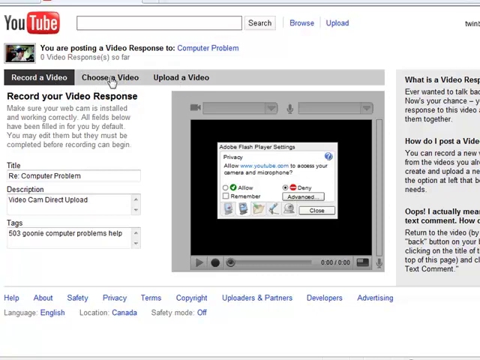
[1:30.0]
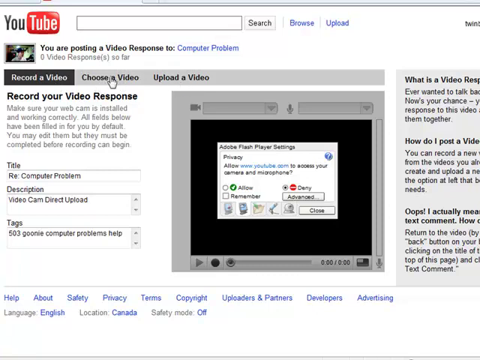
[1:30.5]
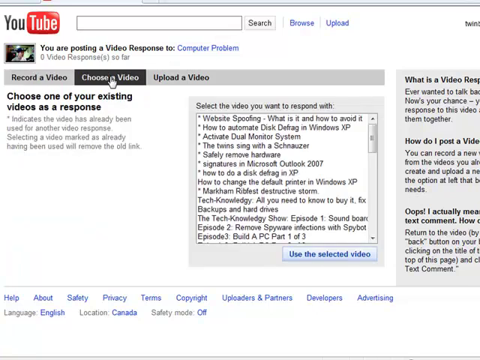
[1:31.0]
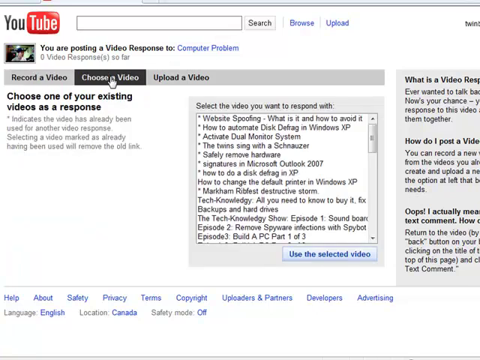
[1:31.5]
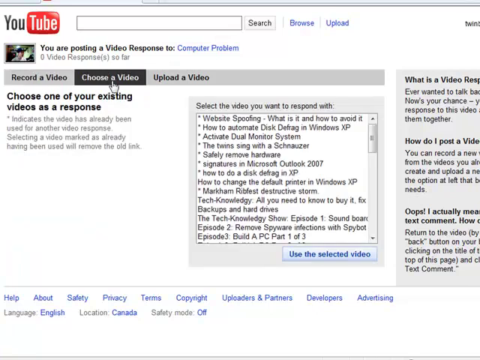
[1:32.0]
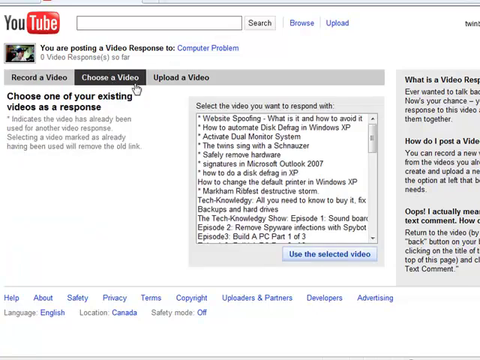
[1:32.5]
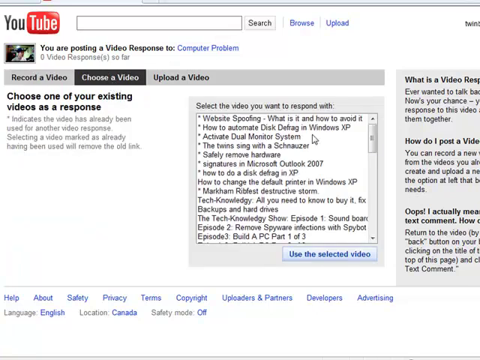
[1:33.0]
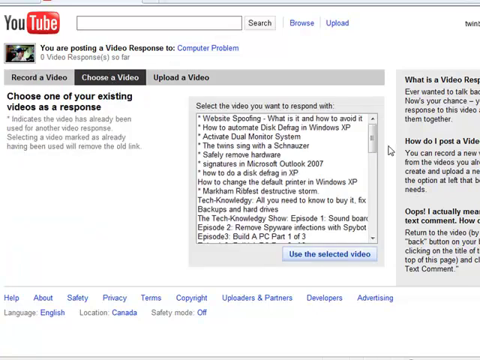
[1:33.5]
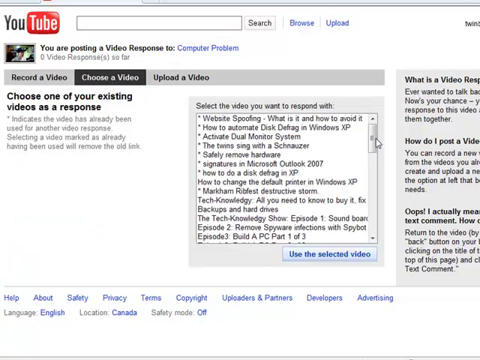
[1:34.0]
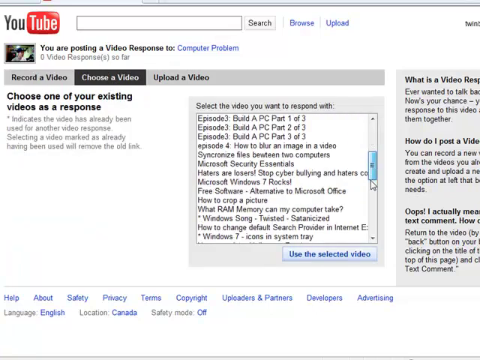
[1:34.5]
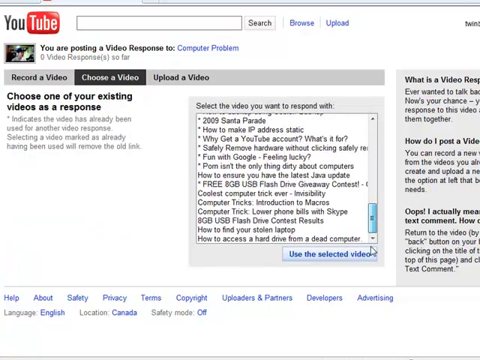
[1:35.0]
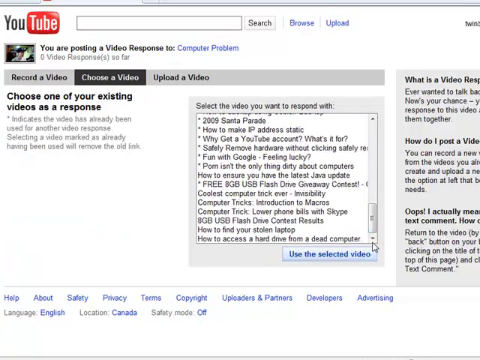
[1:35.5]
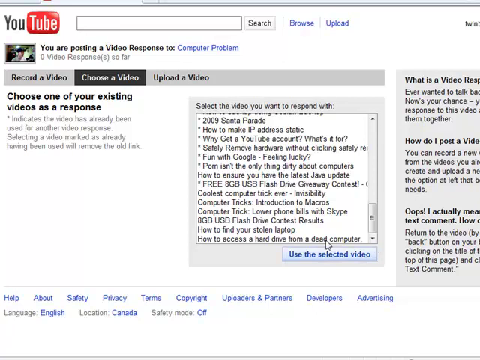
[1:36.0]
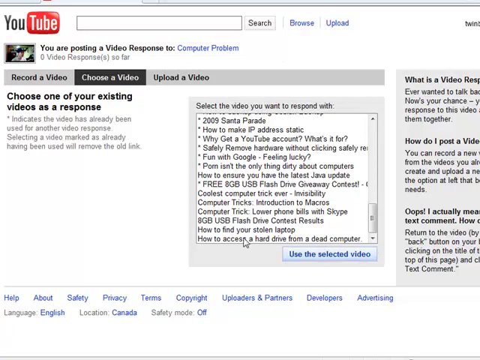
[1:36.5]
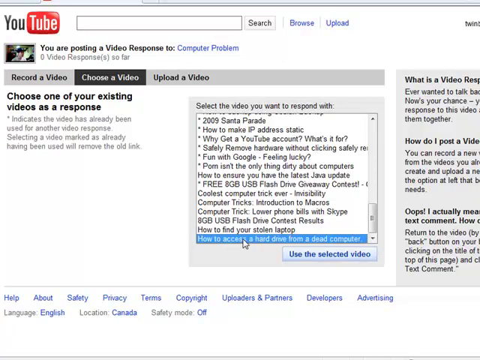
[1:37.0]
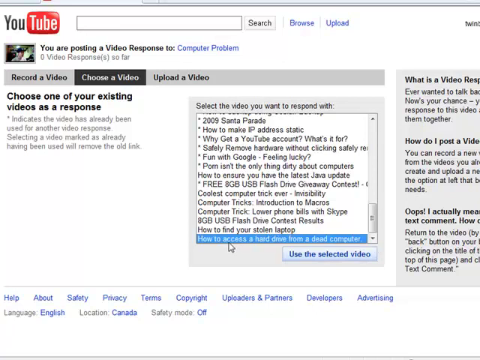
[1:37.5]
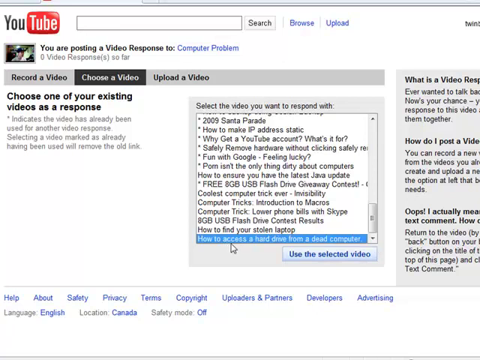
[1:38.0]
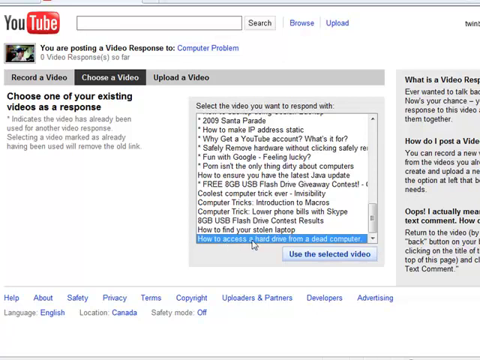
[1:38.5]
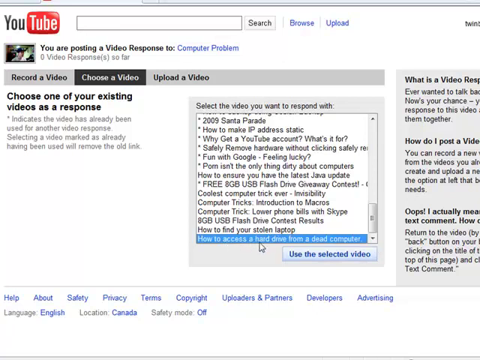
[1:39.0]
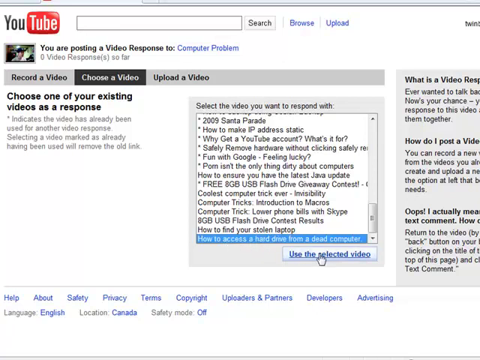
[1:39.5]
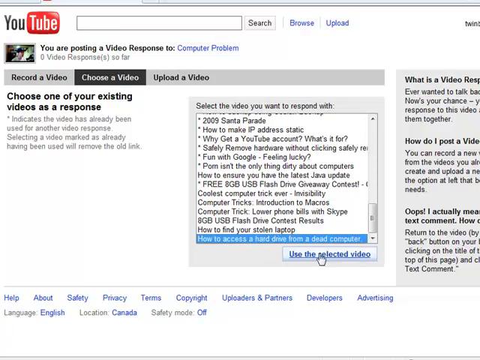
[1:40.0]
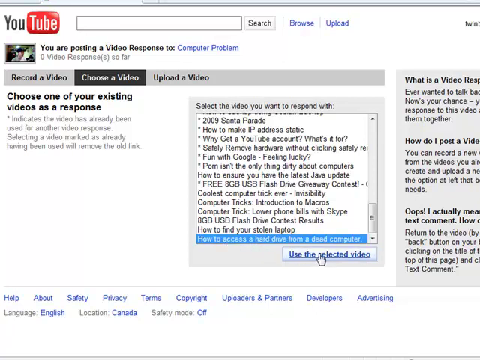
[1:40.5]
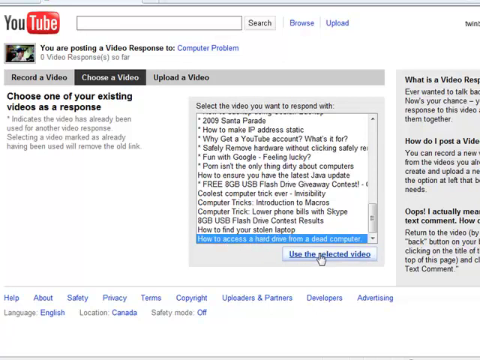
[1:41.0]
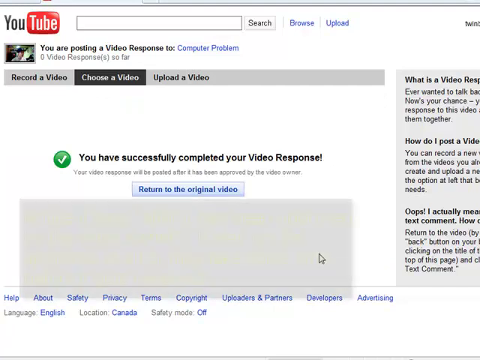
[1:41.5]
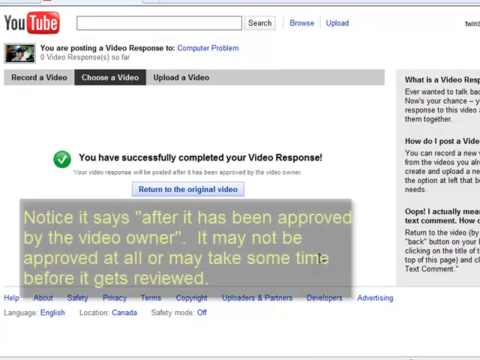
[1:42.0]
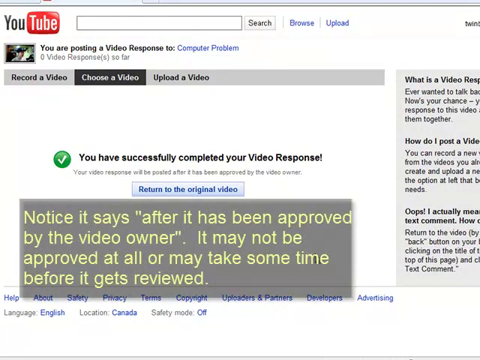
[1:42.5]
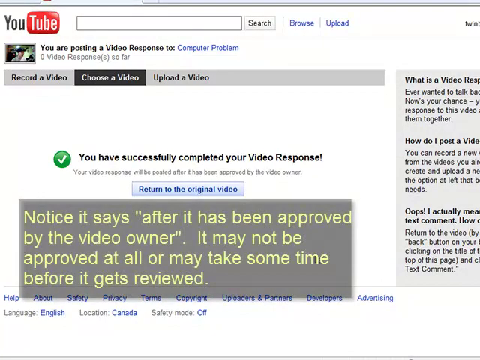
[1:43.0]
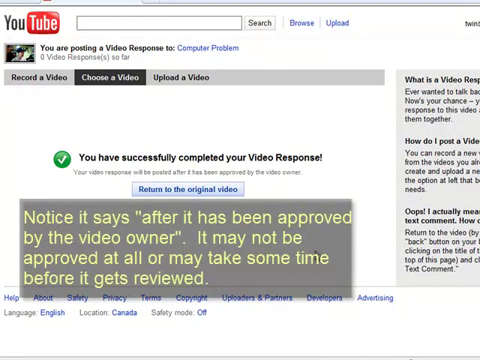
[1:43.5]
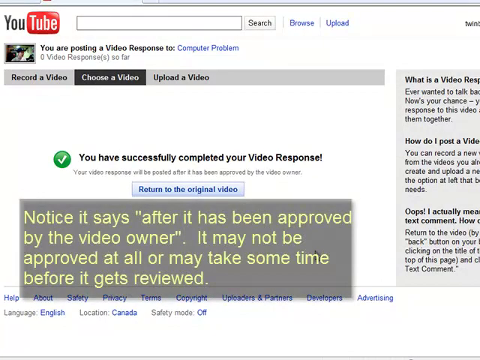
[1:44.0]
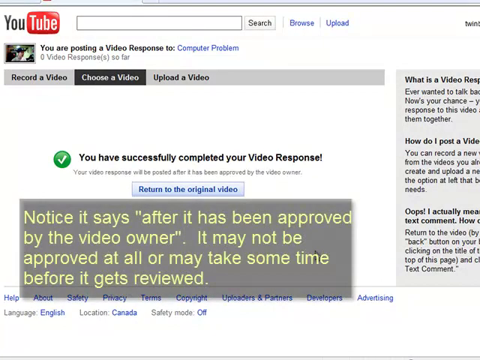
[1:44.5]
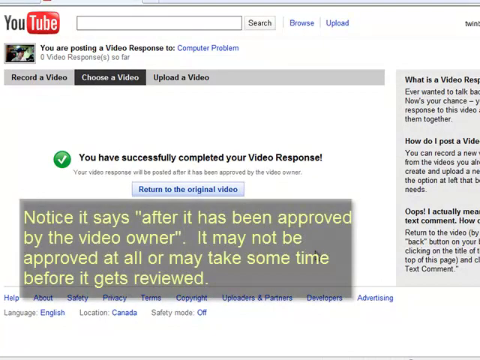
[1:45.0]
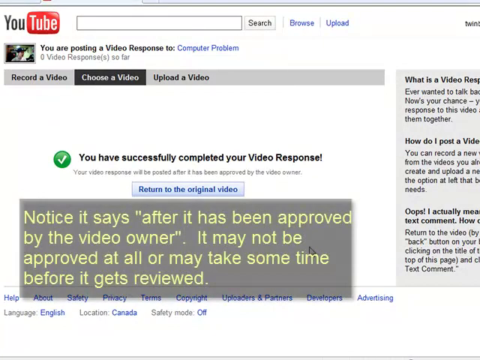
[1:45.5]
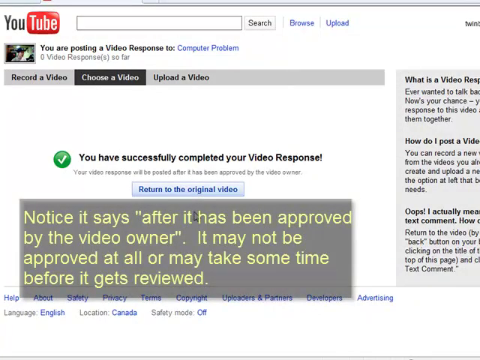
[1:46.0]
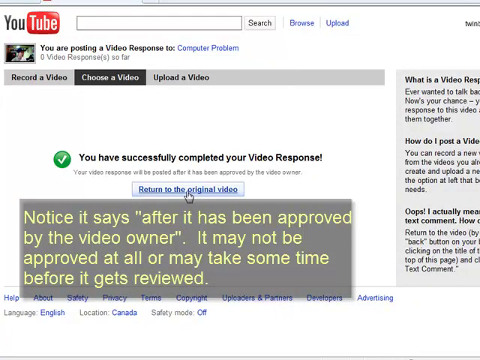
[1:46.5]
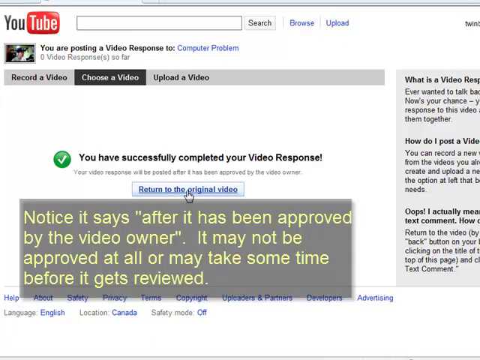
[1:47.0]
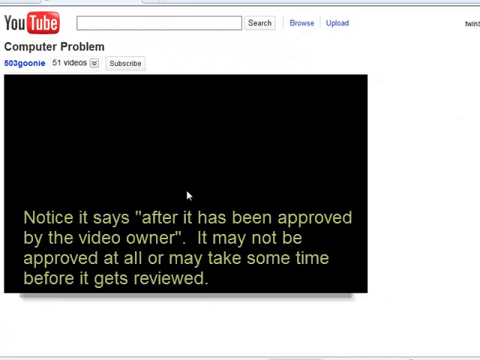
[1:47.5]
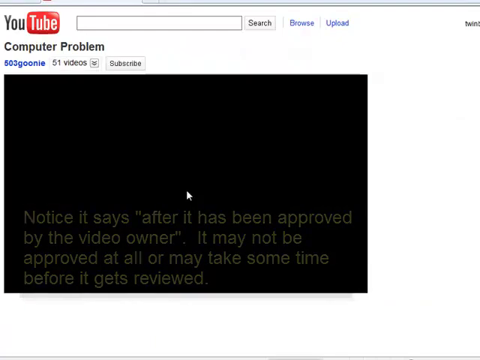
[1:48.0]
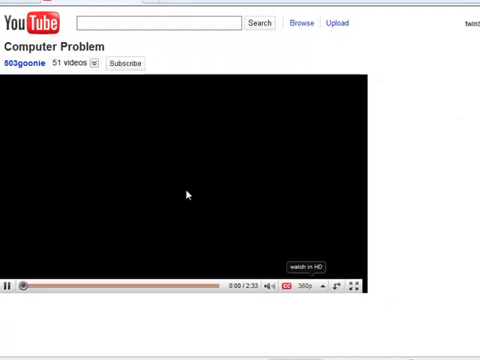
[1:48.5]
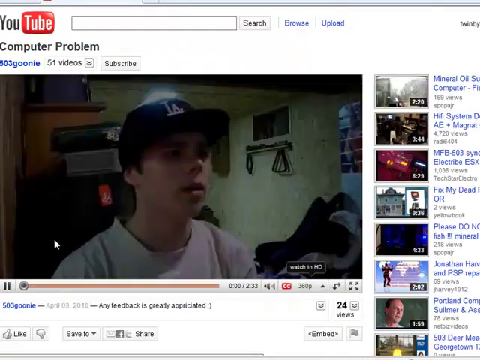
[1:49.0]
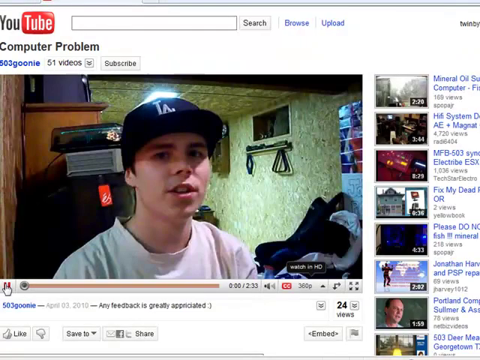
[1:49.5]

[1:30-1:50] The mouse clicks on "Choose a video", which opens a small panel in the centre of the screen titled "Select the video you want to respond with", containing a list of video titles. The pointer grabs the slider bar on the right-hand side of the panel, scrolls right down to the very bottom, and selects the last option on the list. It then moves to the button below the list, "use the selected video", and clicks it. The next screen shows a green tick and the words "you have successfully completed your video response", with a button below, "return to the original video". A caption appears in a gray background box with yellow text: "Notice it says, after it has been approved by the video owner, it may not be approved at all or may take some time before it gets reviewed". The mouse clicks the return button, and the screen goes back to the original page shown at the start of the video.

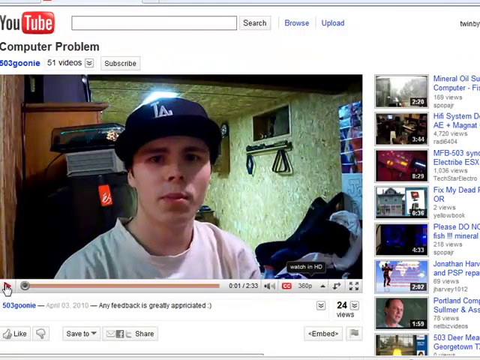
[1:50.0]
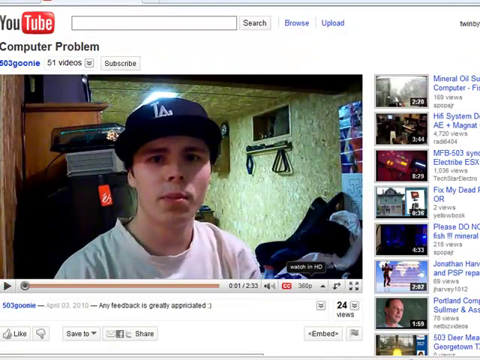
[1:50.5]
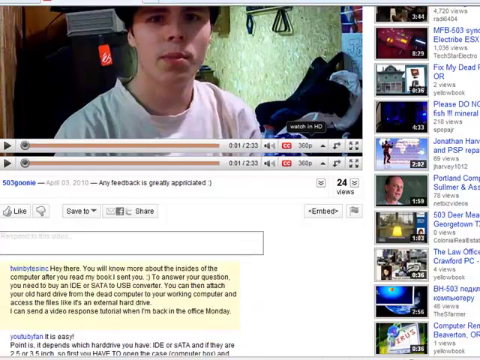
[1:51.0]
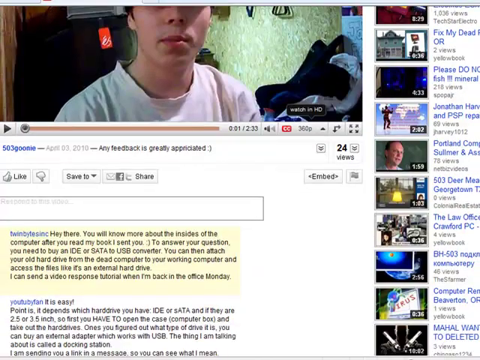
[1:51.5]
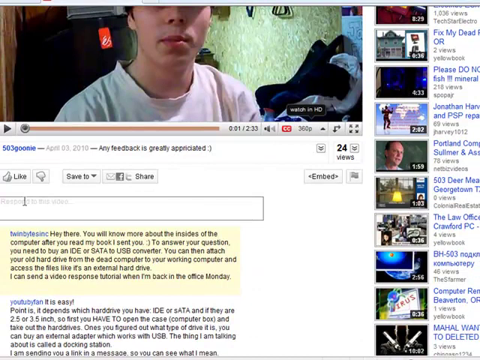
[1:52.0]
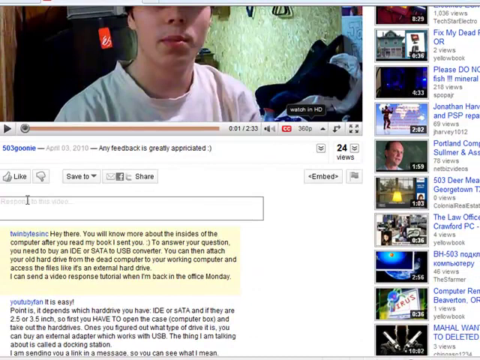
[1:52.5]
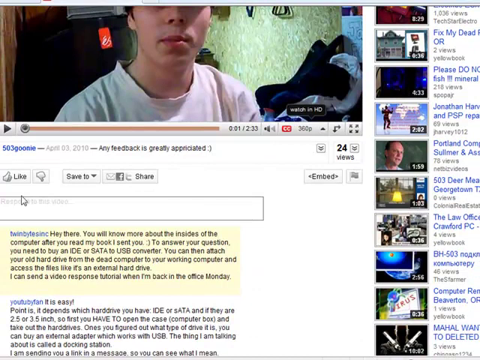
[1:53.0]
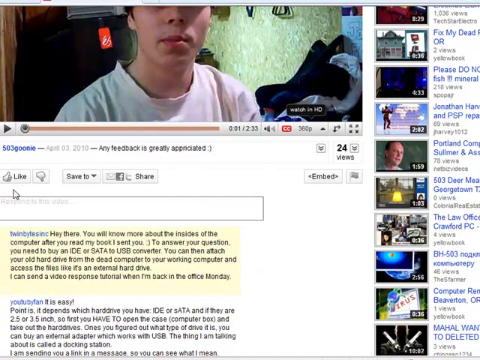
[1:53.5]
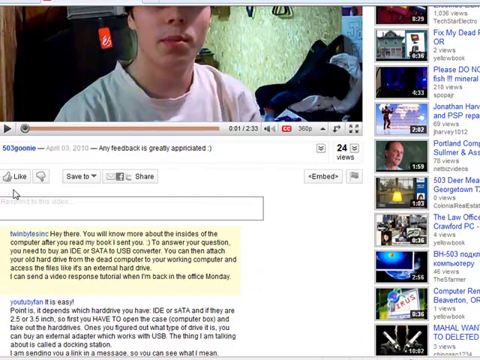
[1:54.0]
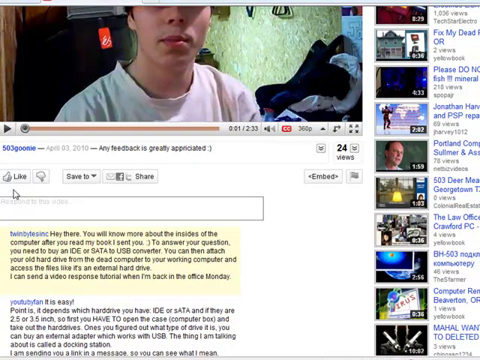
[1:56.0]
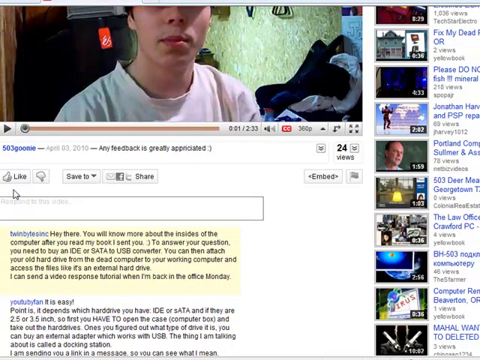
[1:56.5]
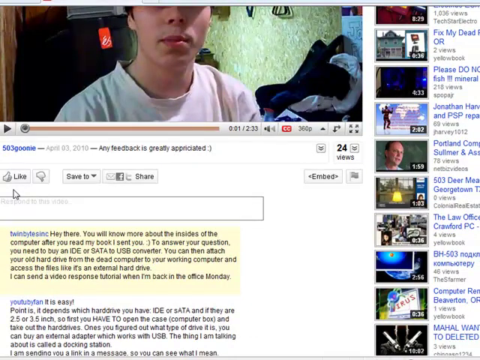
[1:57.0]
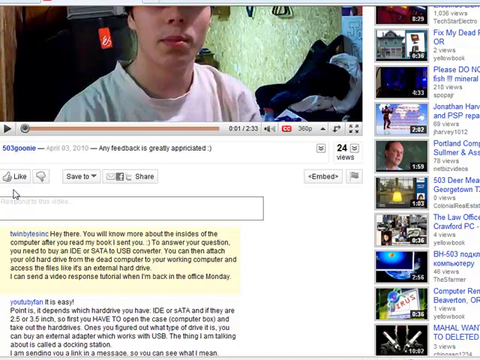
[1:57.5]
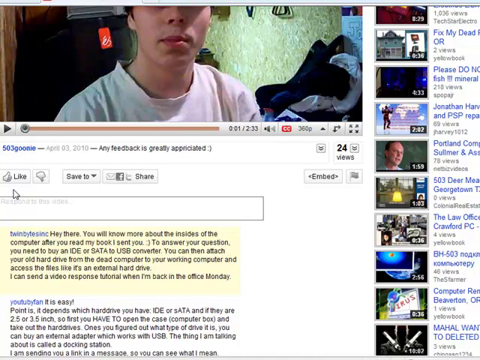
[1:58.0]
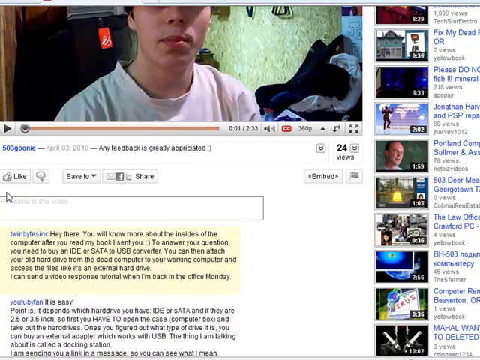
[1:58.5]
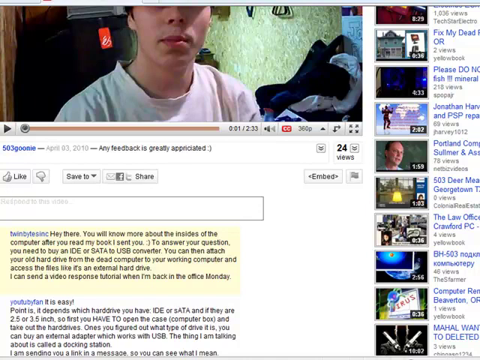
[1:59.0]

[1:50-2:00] The original screen from the beginning of the video is shown, and the user scrolls up slightly to reveal the comment entry box with a couple of comments below it. The video response that was just submitted appears not yet to be showing in the comments below the video. The video slider bar is now back at the beginning of the video, ready to play from the start, rather than about fifty percent of the way through as before.